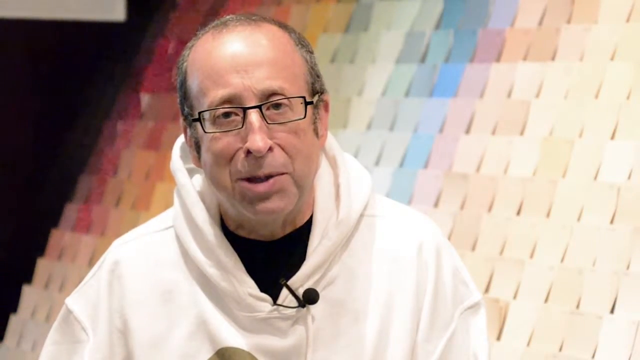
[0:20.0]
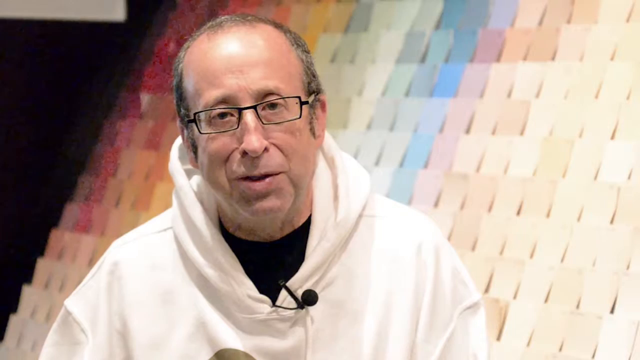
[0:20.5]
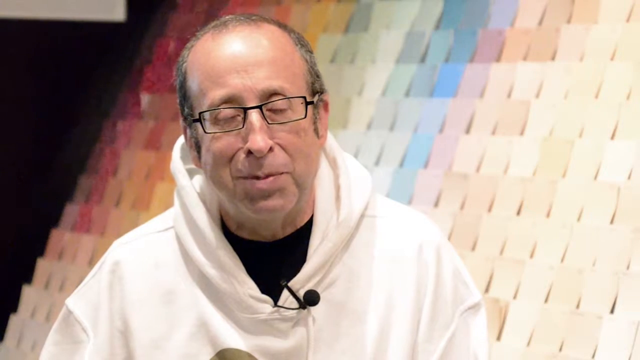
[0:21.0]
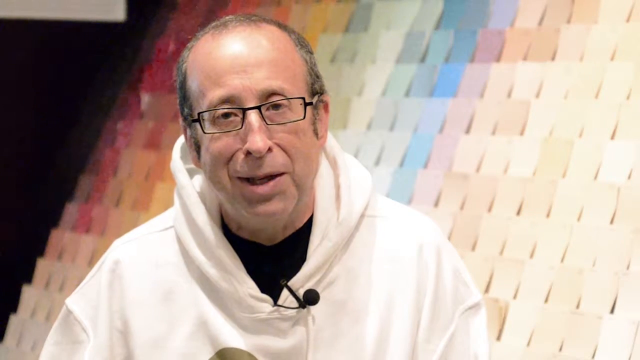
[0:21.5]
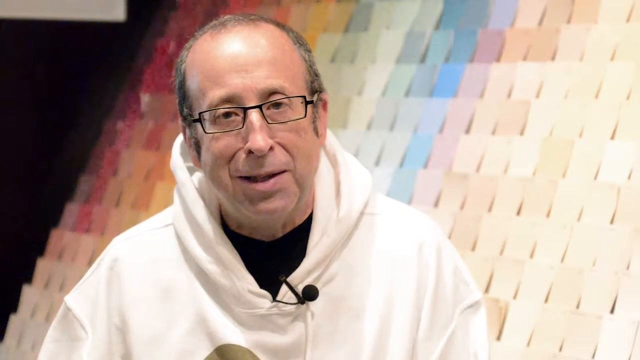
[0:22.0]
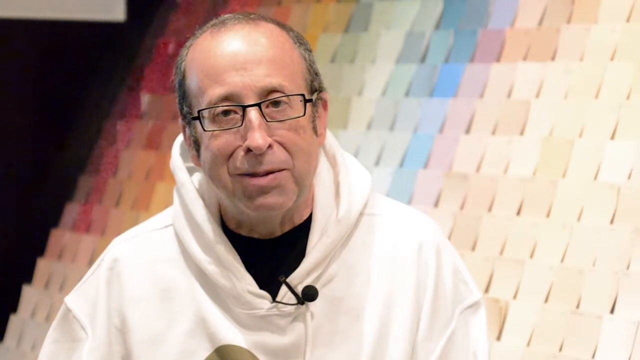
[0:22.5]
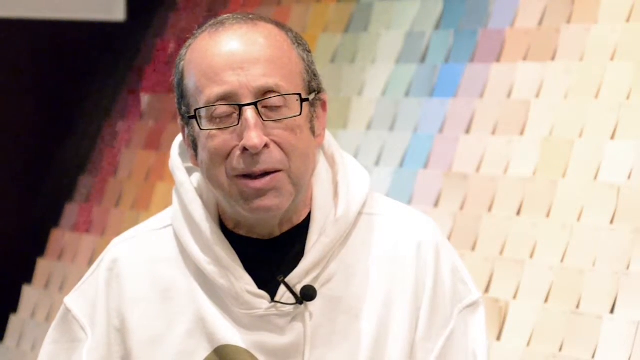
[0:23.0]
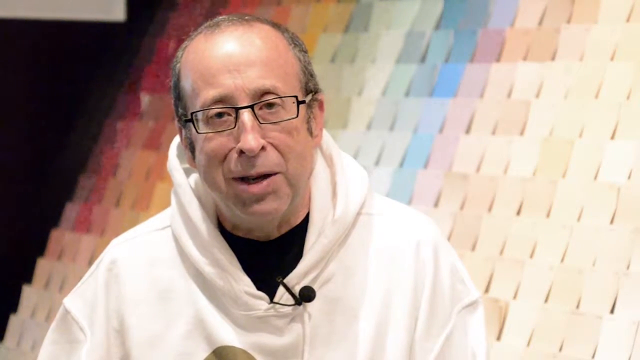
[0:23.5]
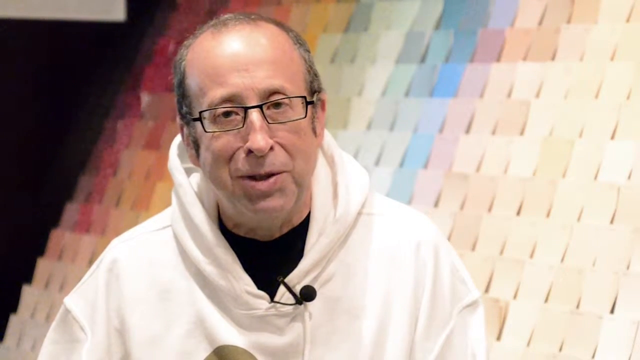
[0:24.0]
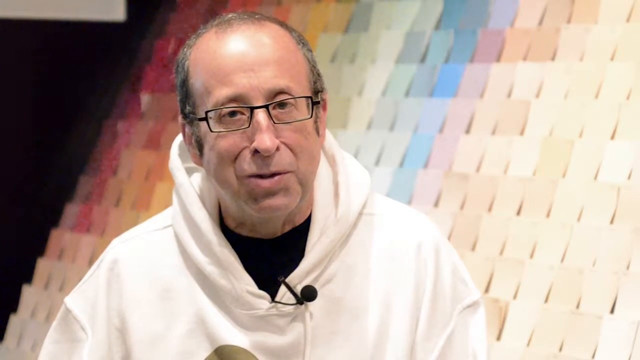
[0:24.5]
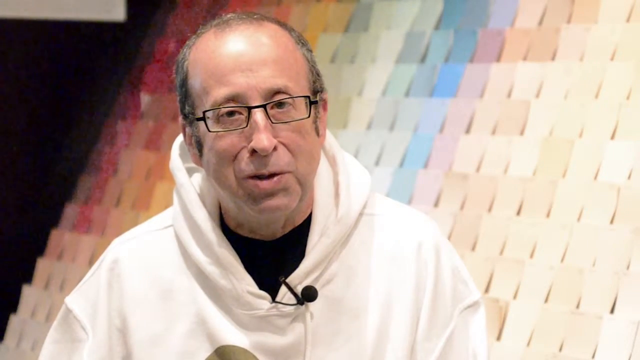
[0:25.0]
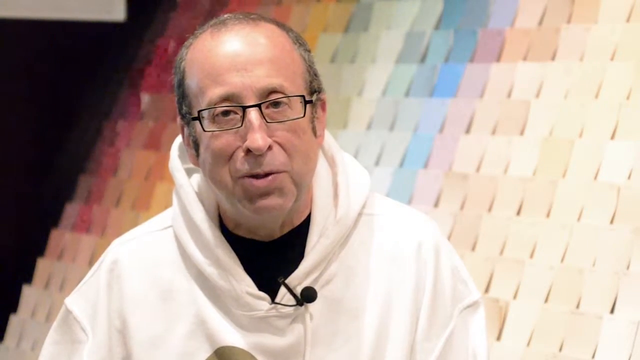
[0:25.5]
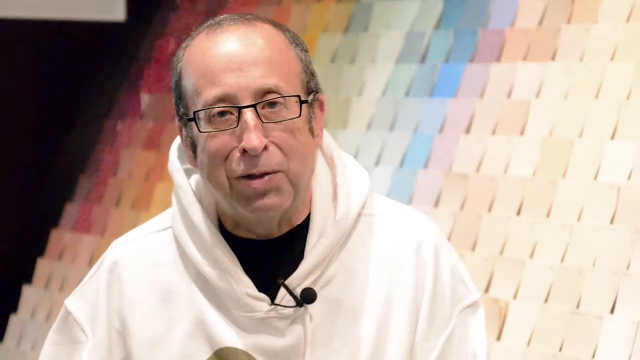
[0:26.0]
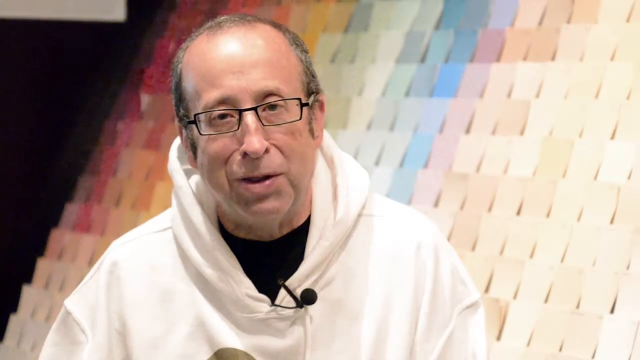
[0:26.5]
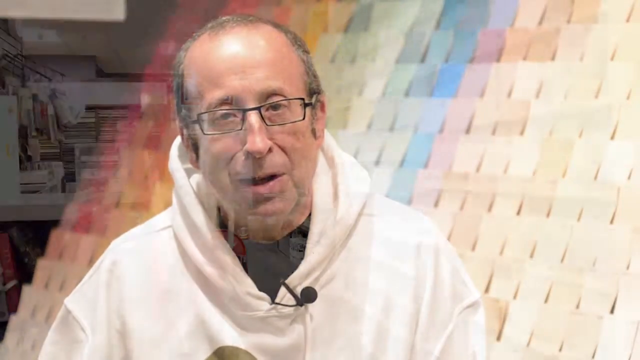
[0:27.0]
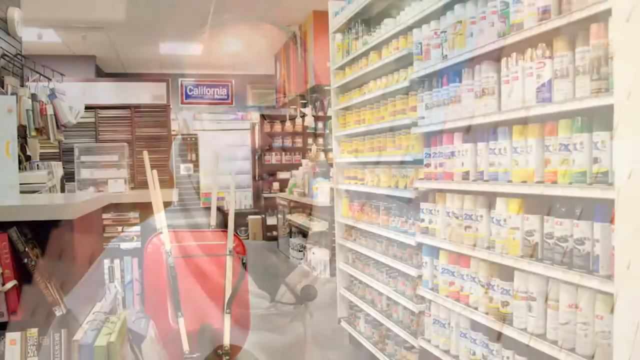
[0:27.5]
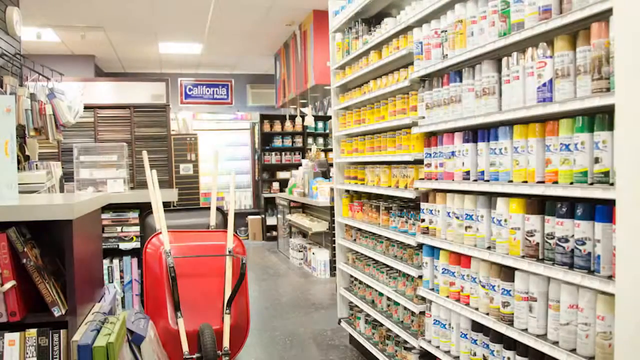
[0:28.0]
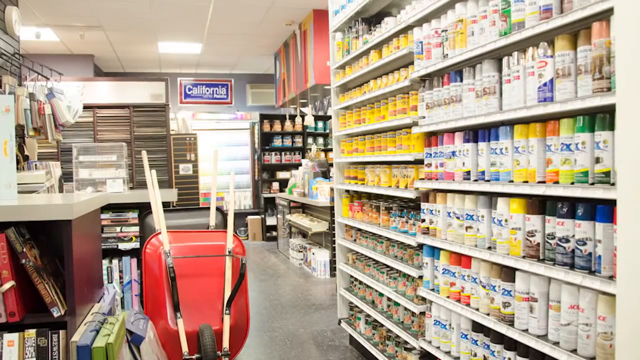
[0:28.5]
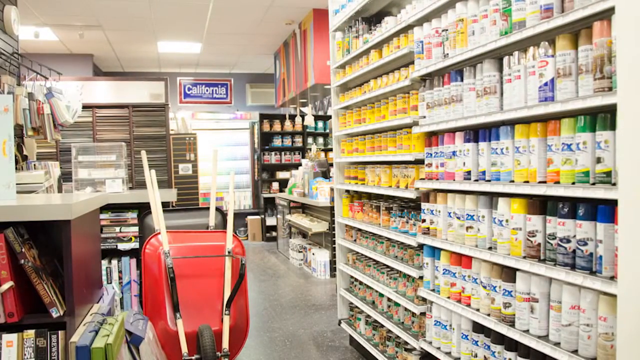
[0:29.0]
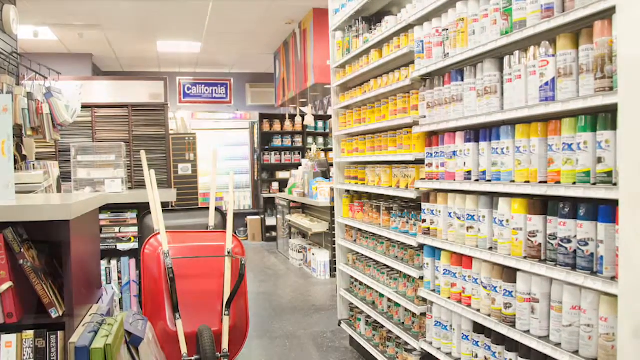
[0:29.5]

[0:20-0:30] Many items are visible in the shop. In the background are placards in different colours, and to the man's right are tubes with different things inside them. Further back are balls in brown, cream and white. A chair is visible, along with a red table lying upside down with its legs facing upward. To the right is a chair with tubes on it. The tubes come in many colours: yellow, white and brown, white and purple, cream and brown, as well as yellow, pink, red, green and lime green. Many of the items are stacked on shelves so they can be seen clearly.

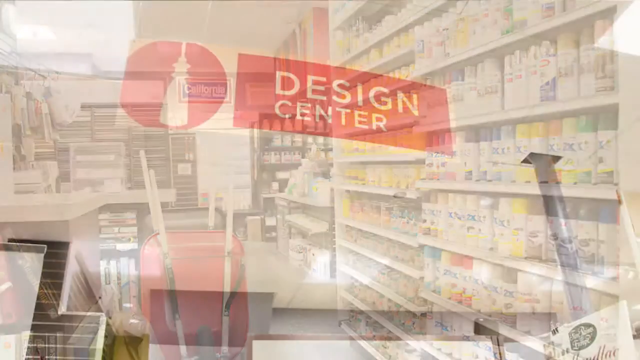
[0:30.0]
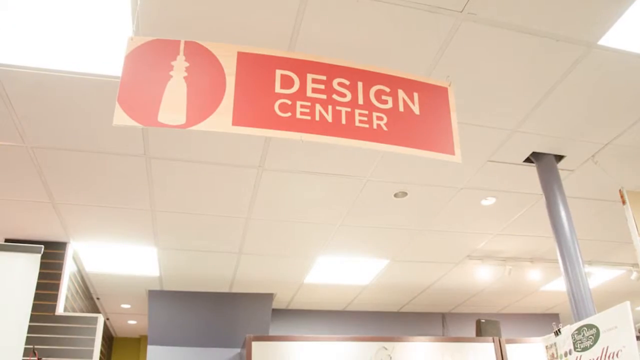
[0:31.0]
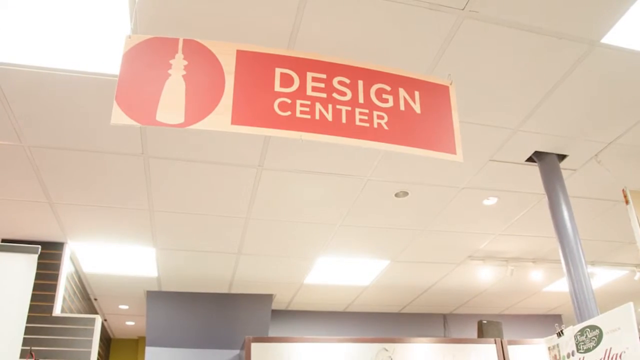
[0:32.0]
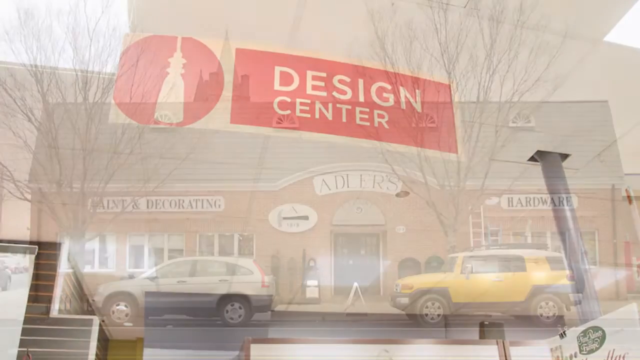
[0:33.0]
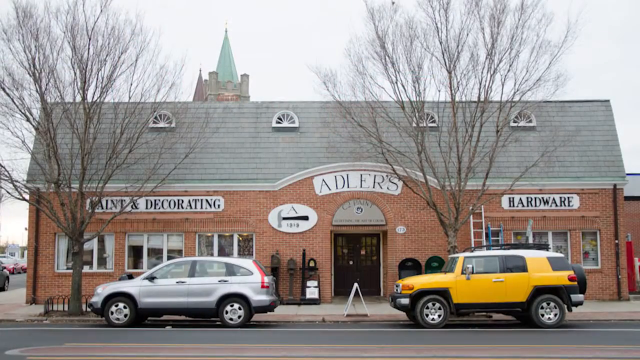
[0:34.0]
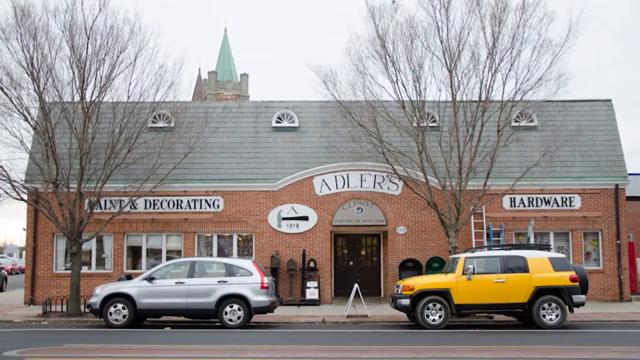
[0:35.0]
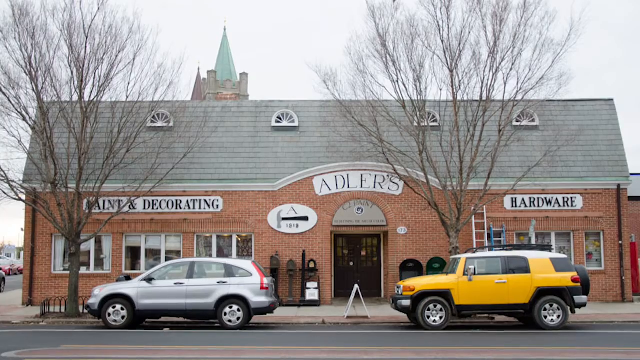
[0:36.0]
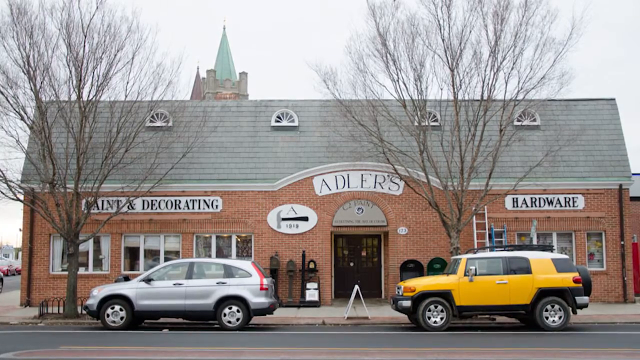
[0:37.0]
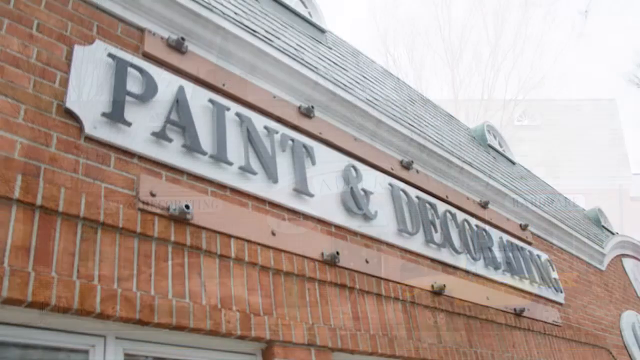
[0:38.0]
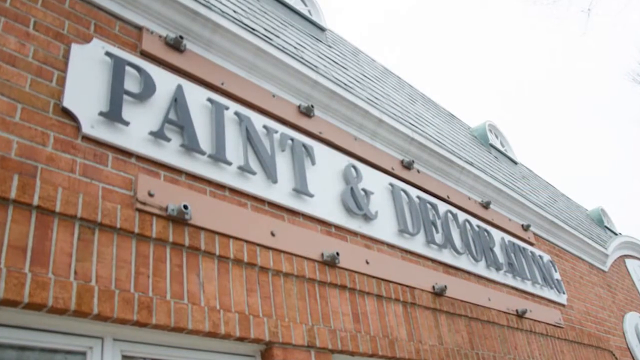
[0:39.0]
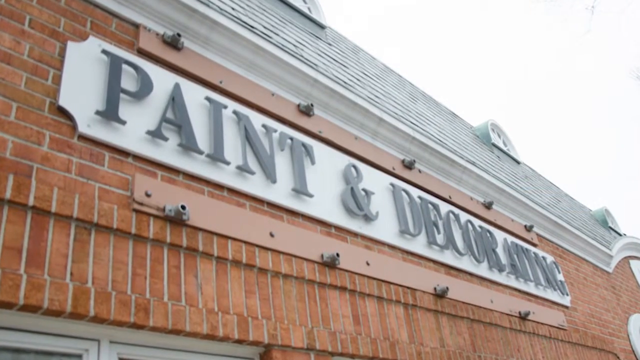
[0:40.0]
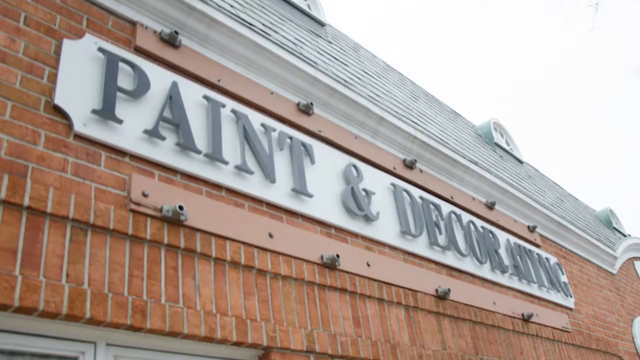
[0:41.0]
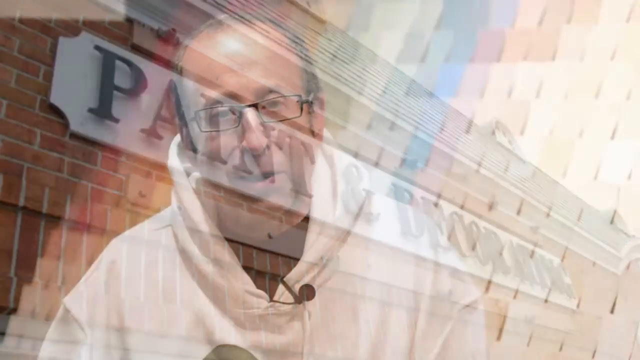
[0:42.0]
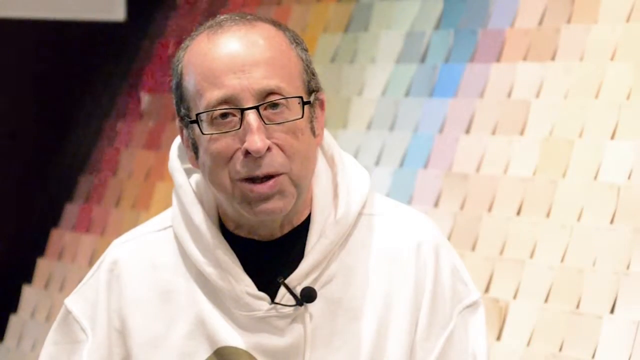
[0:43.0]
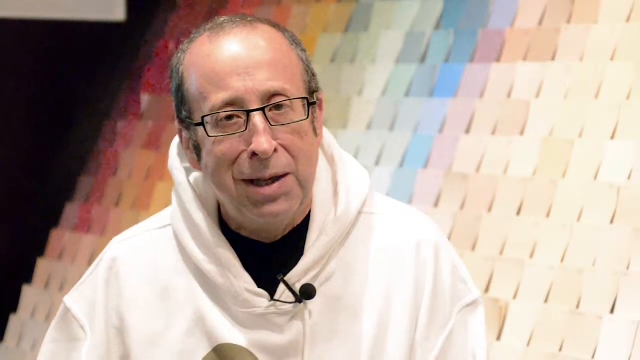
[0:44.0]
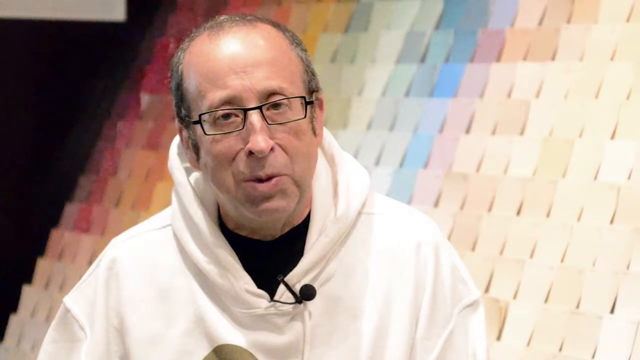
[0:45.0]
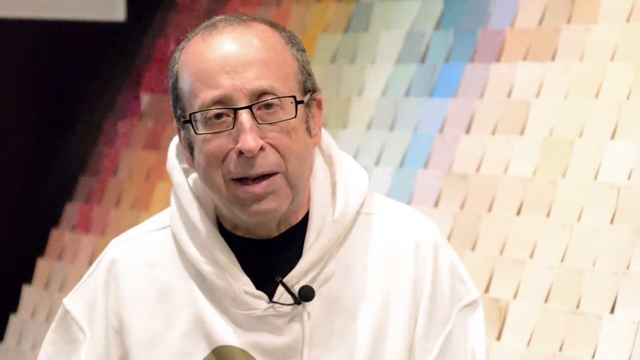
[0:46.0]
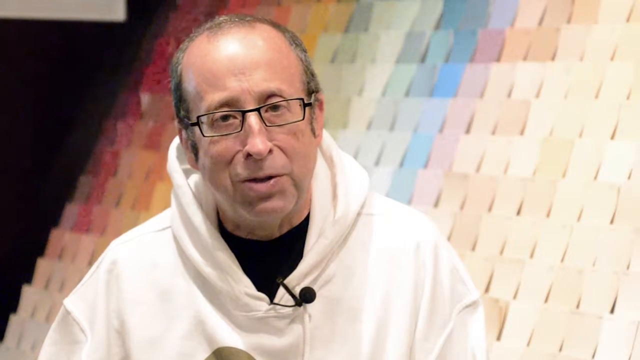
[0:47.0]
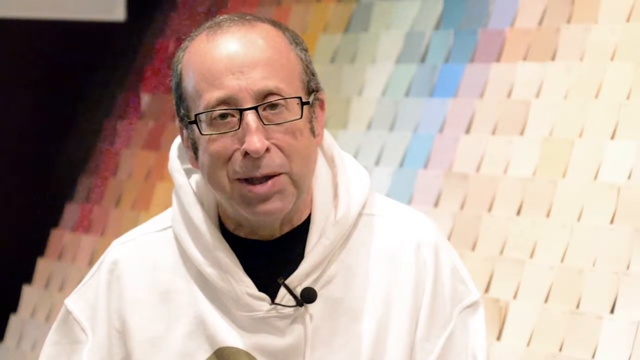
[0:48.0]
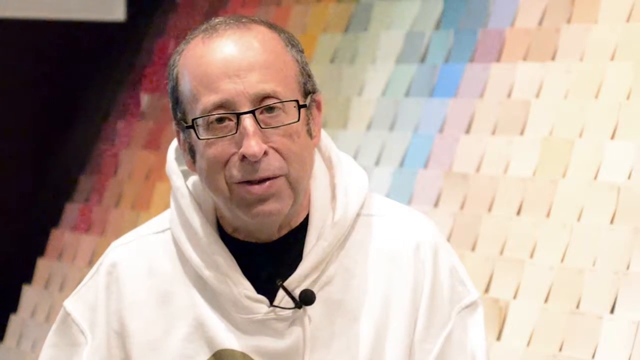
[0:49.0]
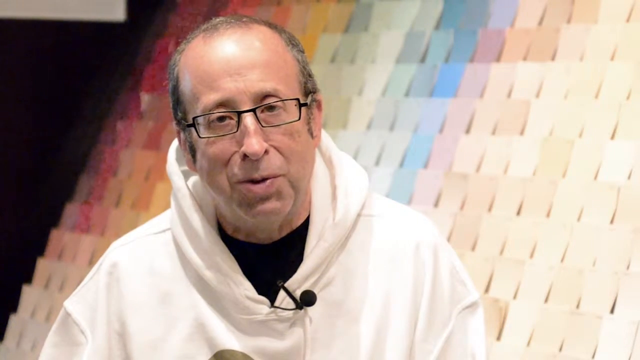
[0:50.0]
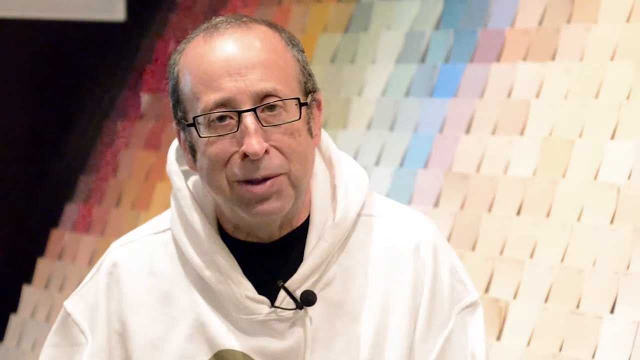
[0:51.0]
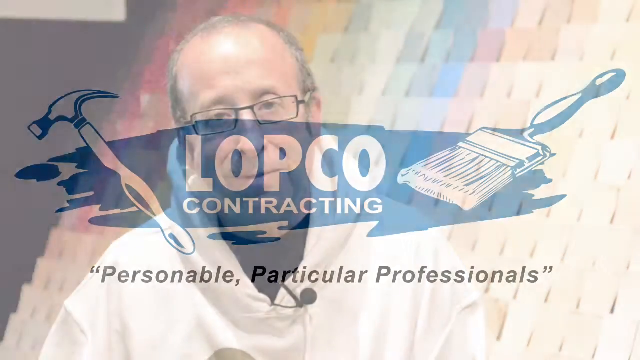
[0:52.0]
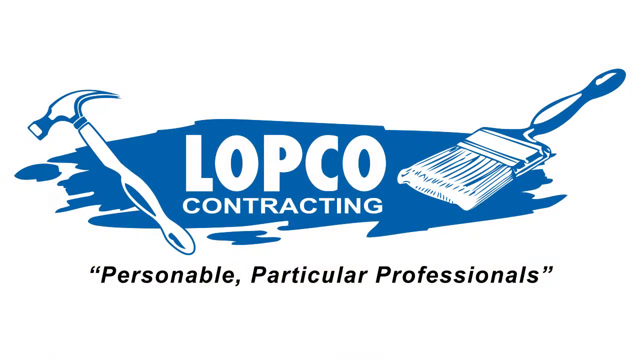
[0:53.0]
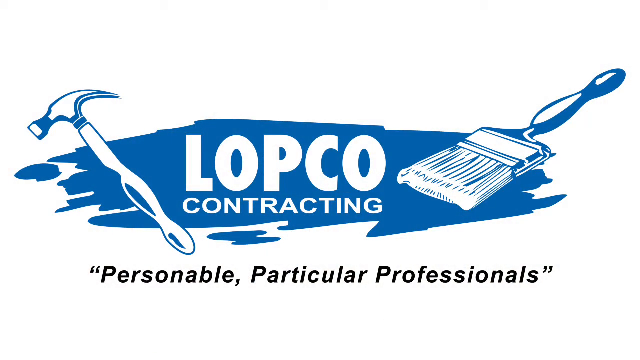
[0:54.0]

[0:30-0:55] Two cars, one yellow and one silver, are parked in front of the hardware store. "Paint and decorating" is written on the website. The man appears again, talking about the hardware store, with placards behind him. The LOPCO logo includes blue paint, a blue and white hammer and a blue and white brush, and a statement is written on it. The word "design" is written in cream on a pink print, and there is a broom at the front of the logo design. Lights are visible.